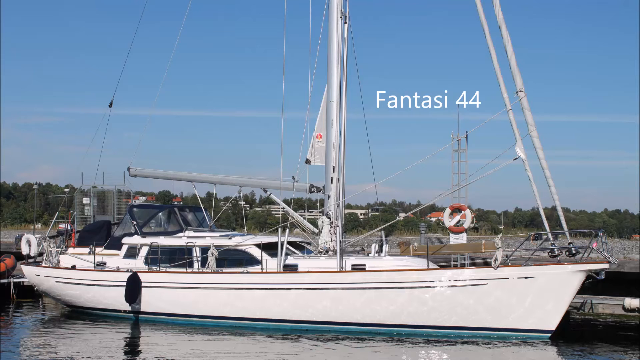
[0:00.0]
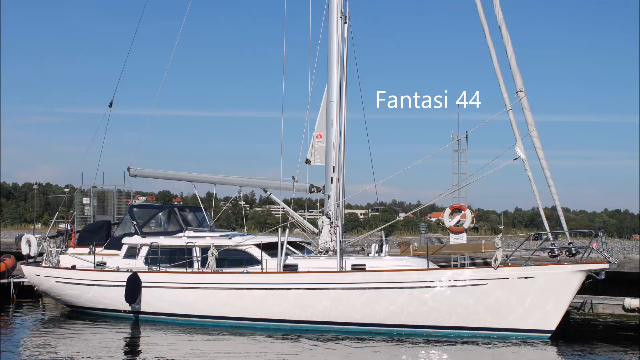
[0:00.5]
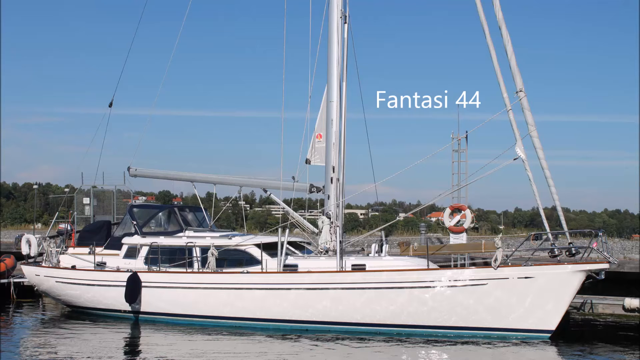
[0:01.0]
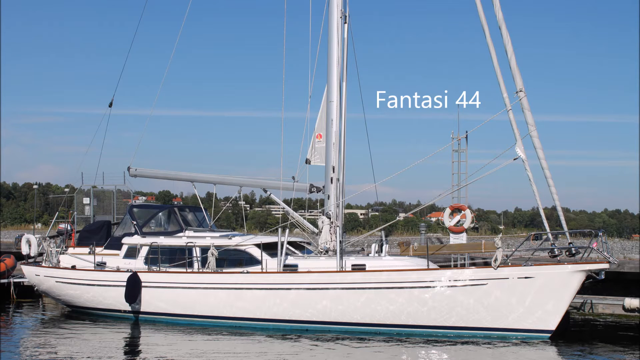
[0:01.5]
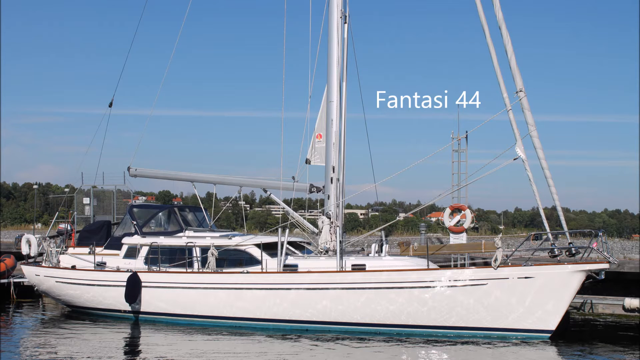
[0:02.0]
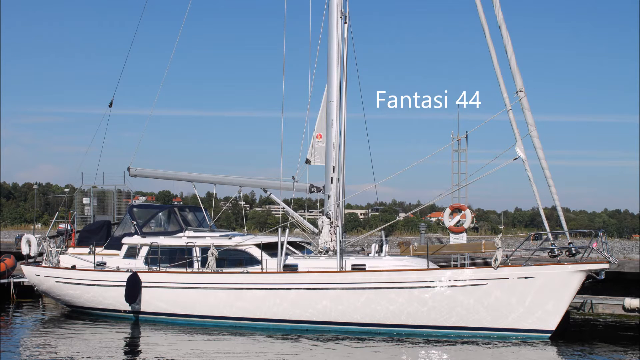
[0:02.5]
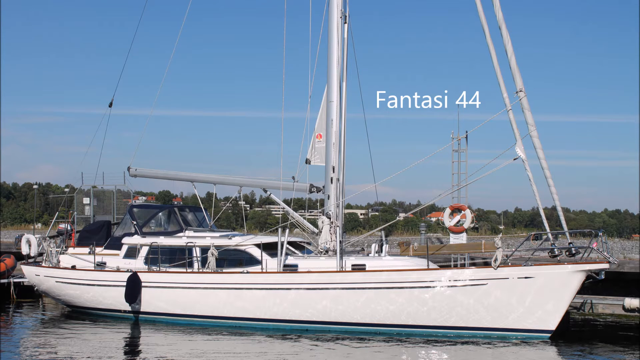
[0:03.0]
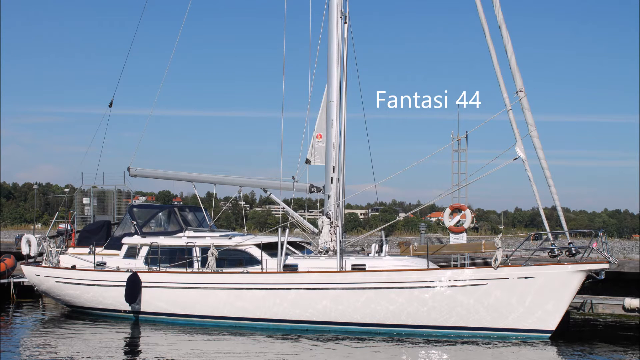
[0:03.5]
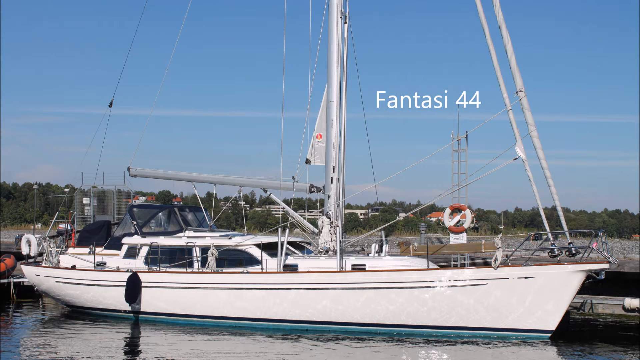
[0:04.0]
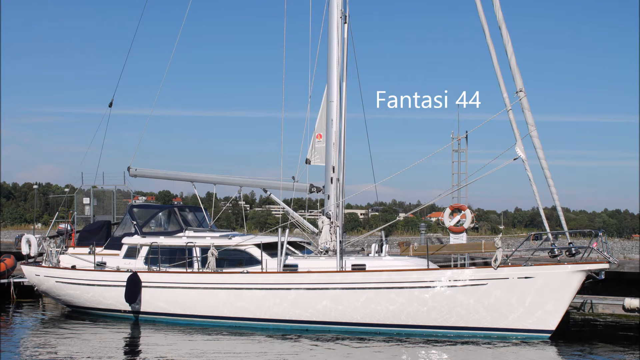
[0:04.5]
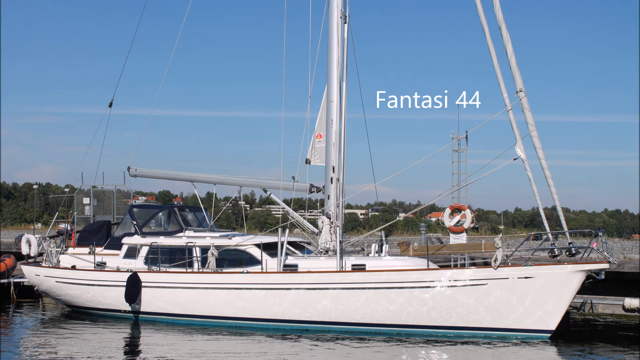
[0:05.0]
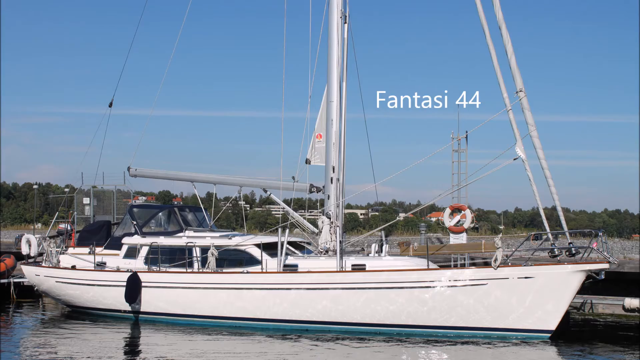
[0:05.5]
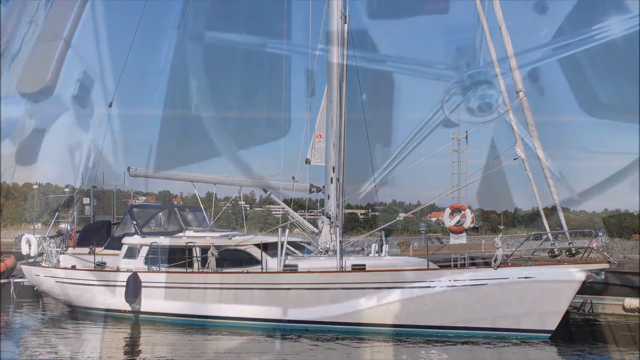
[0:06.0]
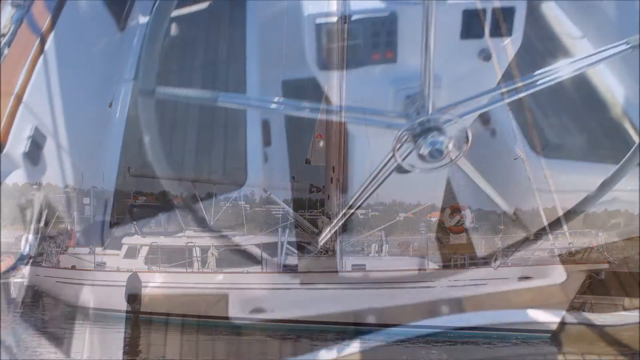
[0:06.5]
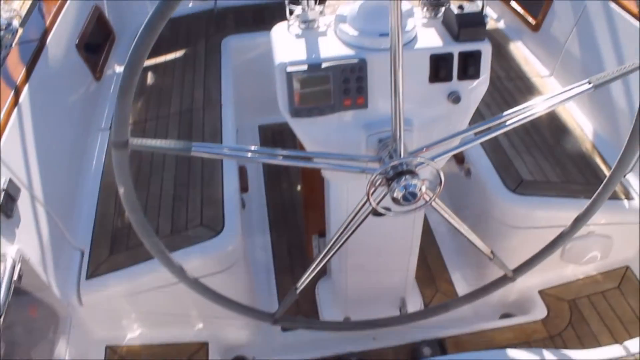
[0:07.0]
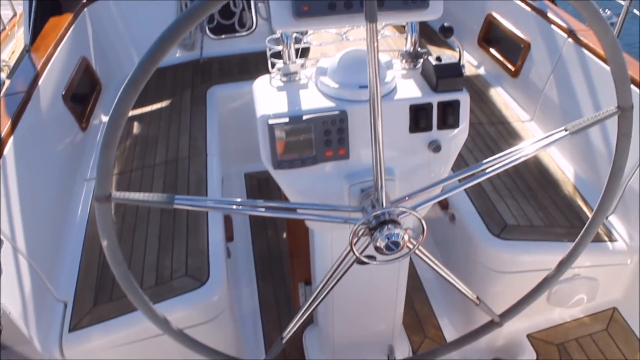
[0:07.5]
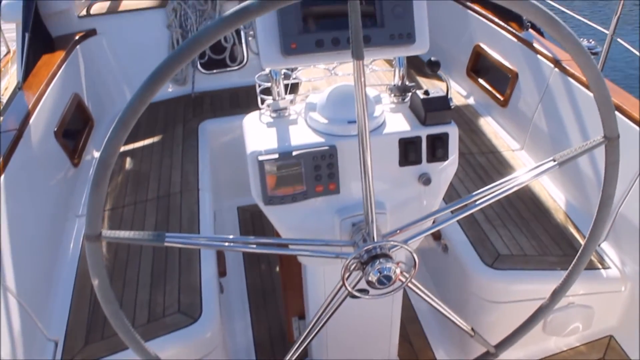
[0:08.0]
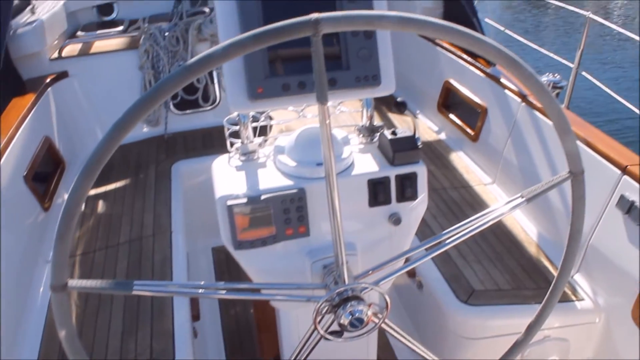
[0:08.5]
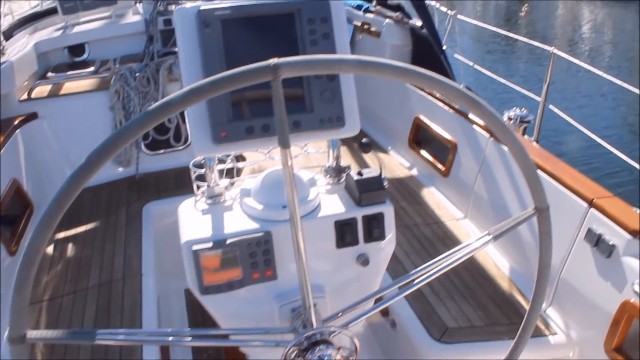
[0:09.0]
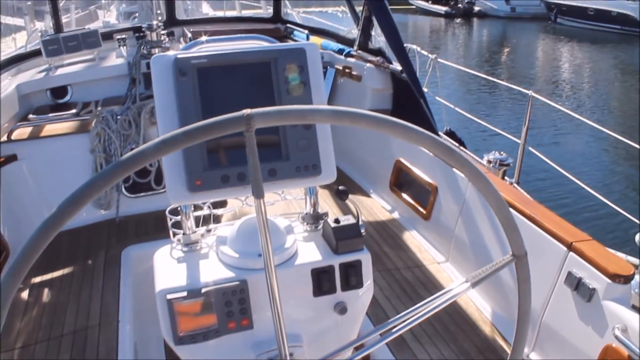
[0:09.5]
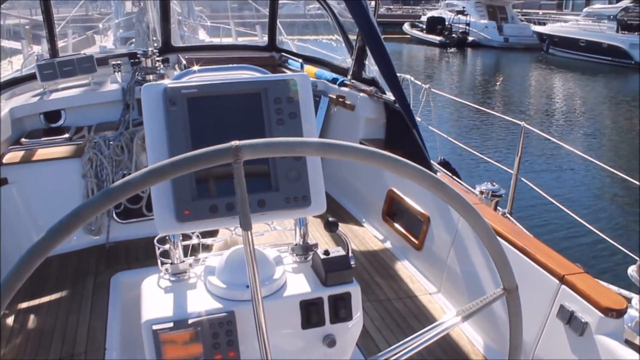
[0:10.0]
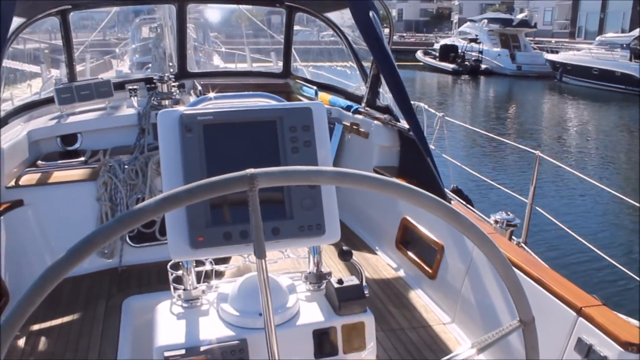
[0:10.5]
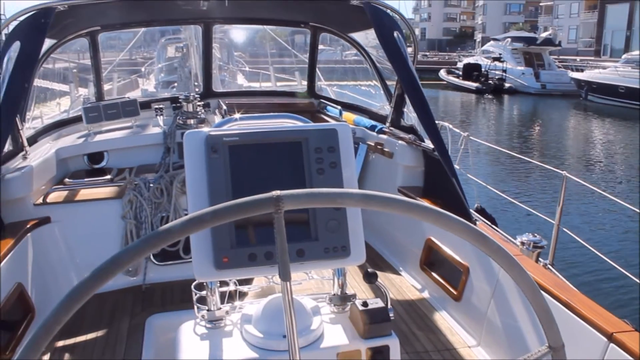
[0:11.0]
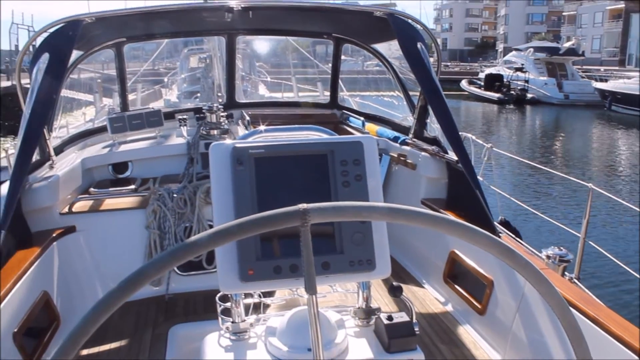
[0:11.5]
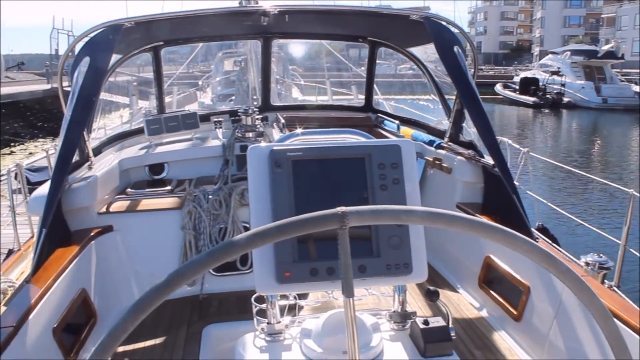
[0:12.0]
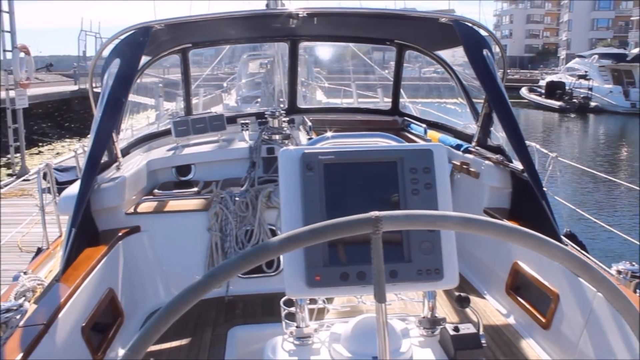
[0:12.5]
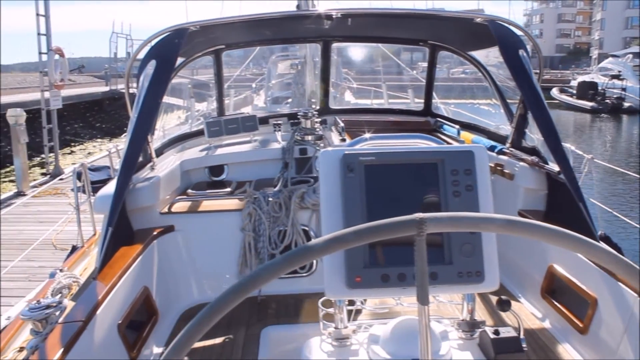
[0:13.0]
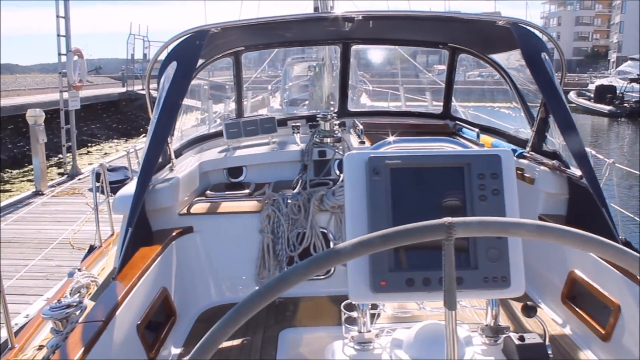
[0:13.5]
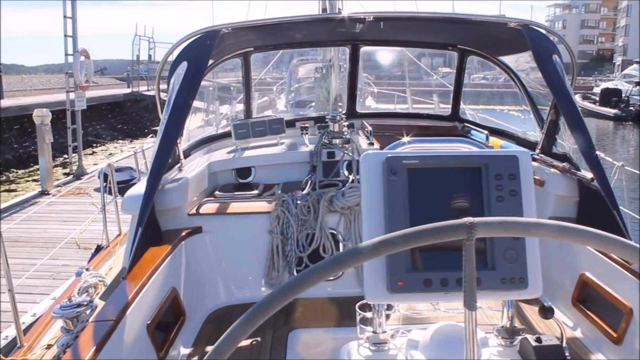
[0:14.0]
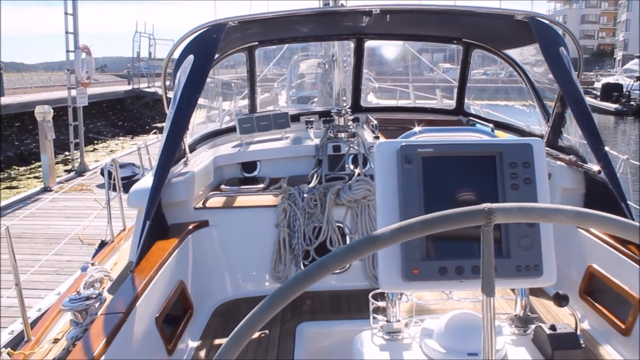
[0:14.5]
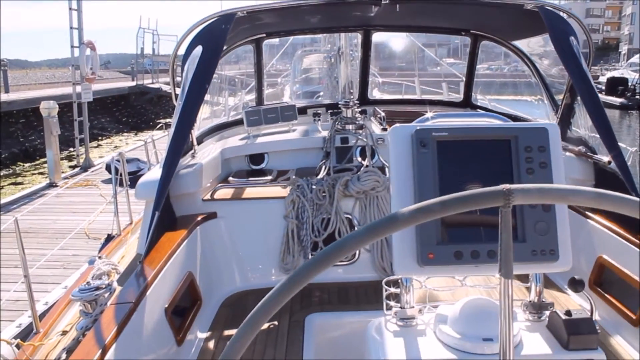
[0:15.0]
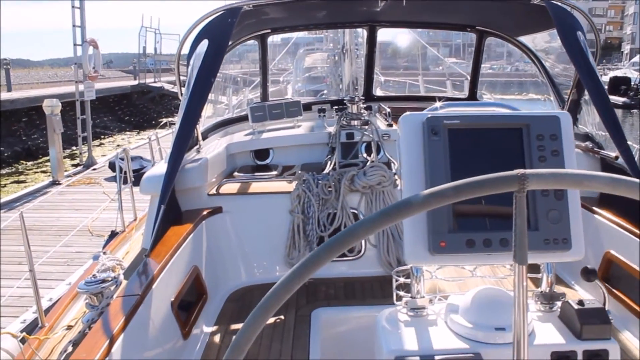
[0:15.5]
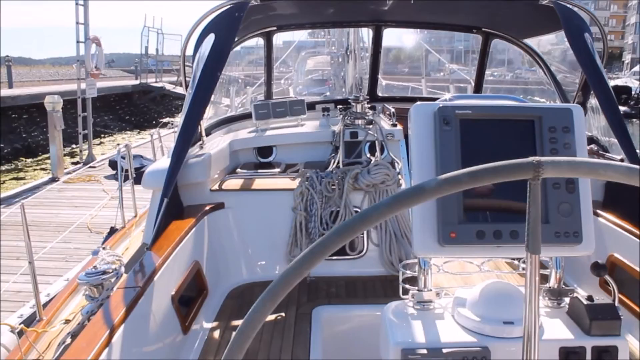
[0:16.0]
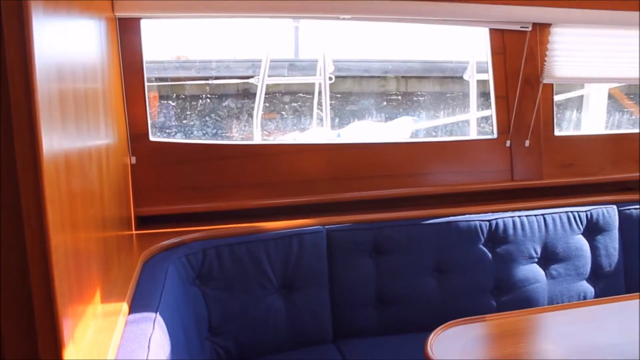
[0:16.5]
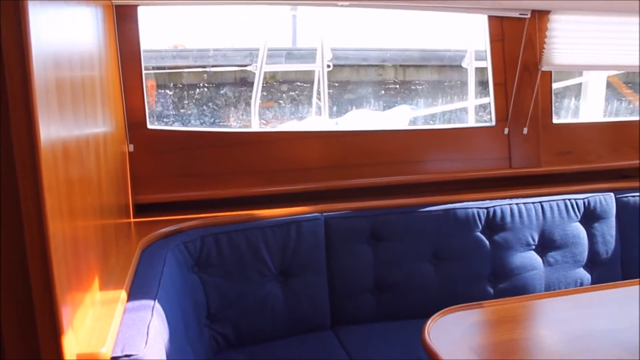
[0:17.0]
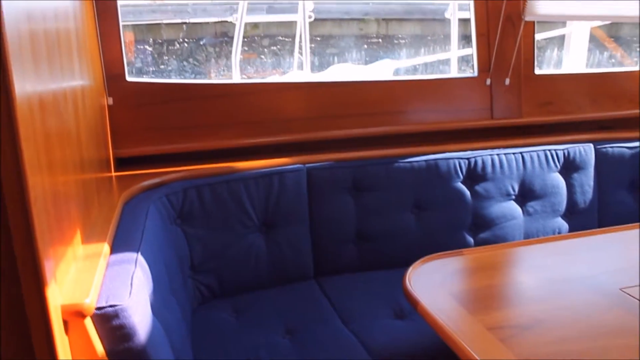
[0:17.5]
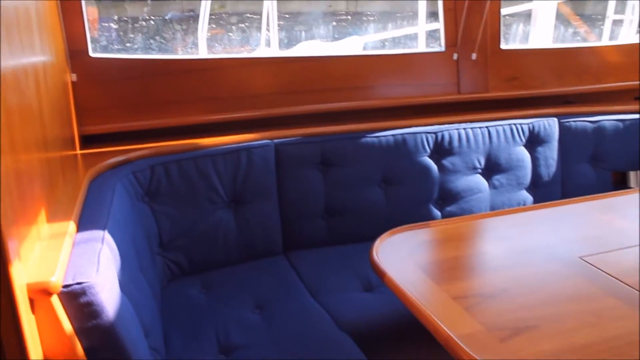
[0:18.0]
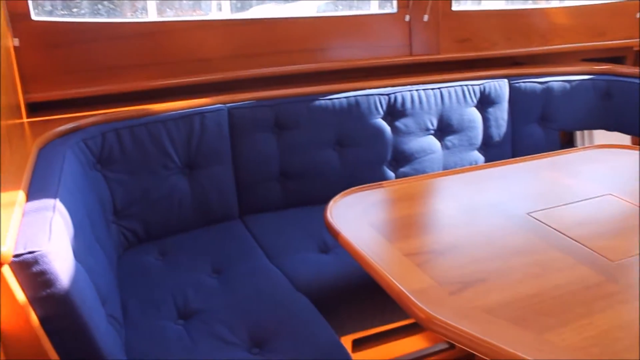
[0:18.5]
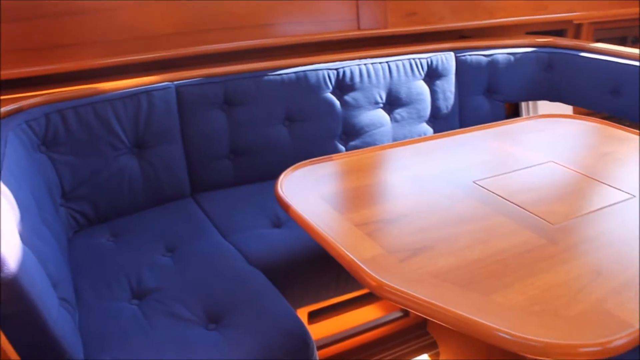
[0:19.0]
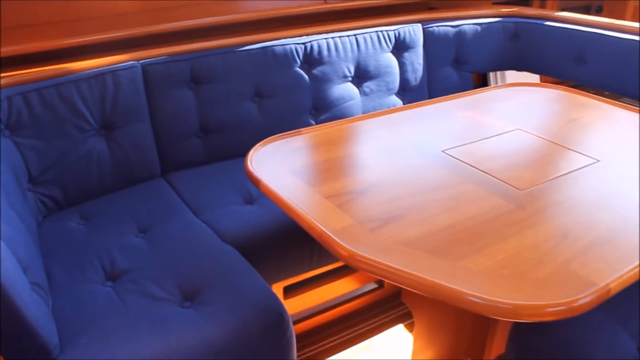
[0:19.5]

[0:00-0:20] A long, white sailboat is seen horizontally from the side, showing its right side. It is docked, with a lot of green trees in the background and blue sky above. The name of the boat, "Fantasi 44", appears in the top right section. The scene then changes to show the inside of the sailboat, where the helm, the wheel of the boat, is visible, along with the setup of the front of the boat and the inside. The scene changes again to show the inside of the boat, with a table and a little seating area around the table.